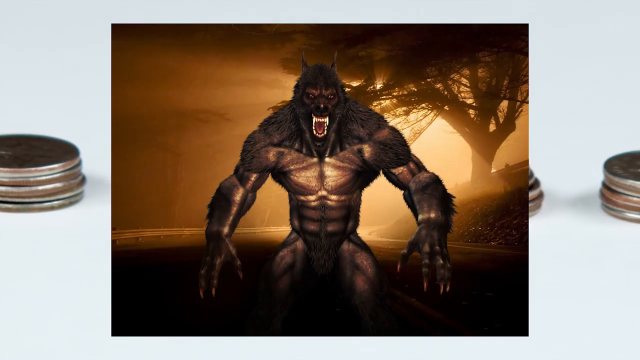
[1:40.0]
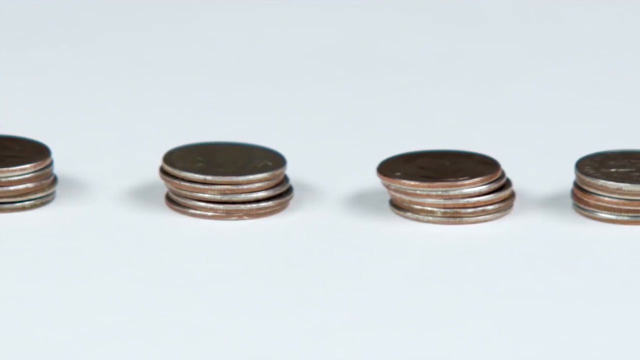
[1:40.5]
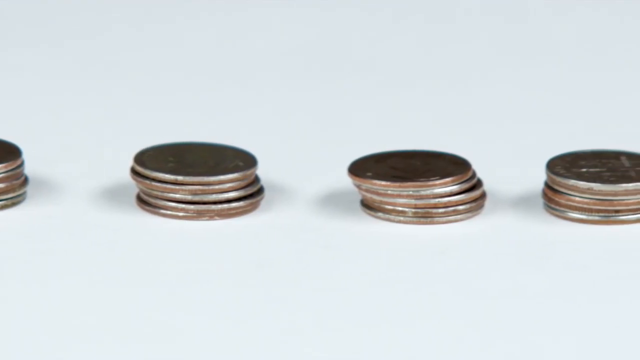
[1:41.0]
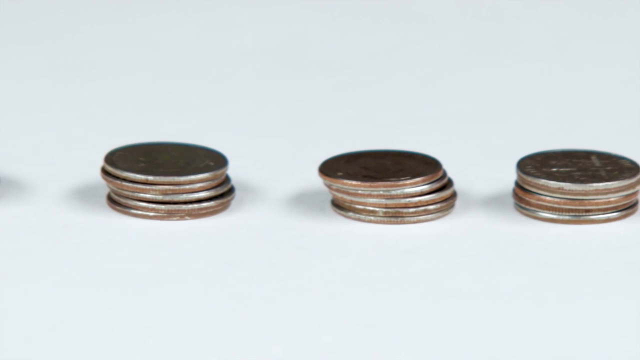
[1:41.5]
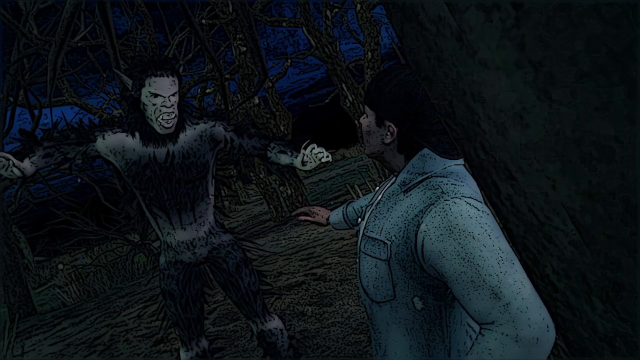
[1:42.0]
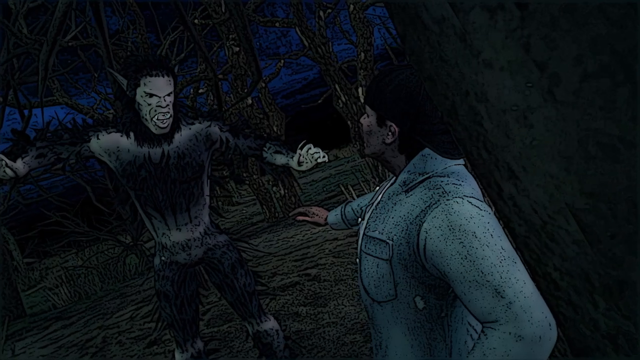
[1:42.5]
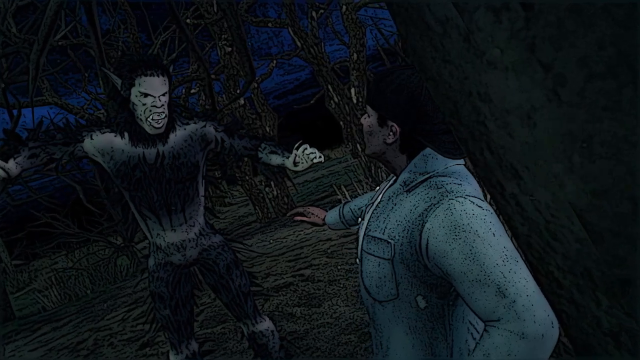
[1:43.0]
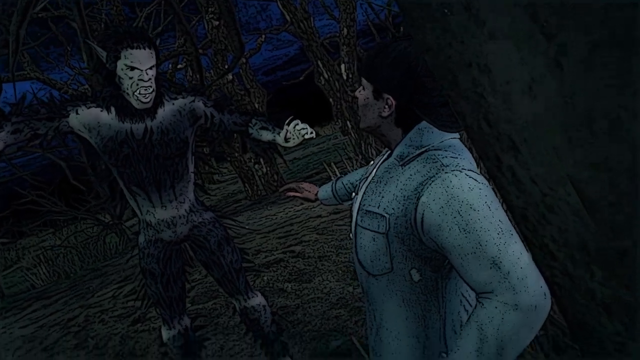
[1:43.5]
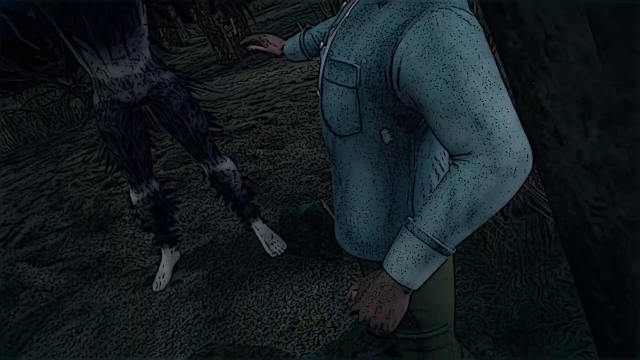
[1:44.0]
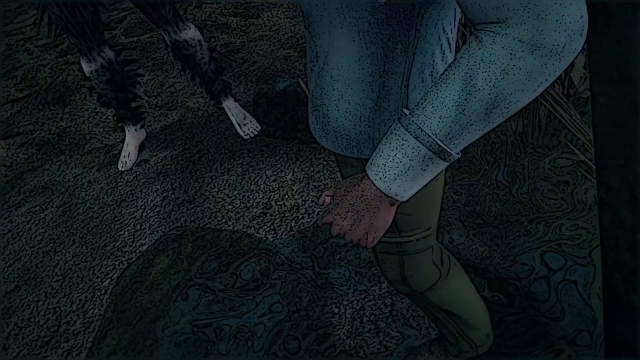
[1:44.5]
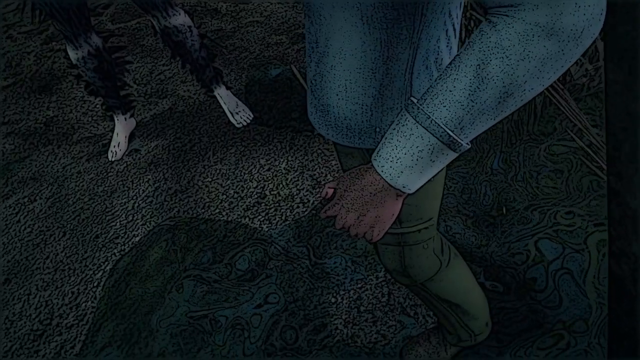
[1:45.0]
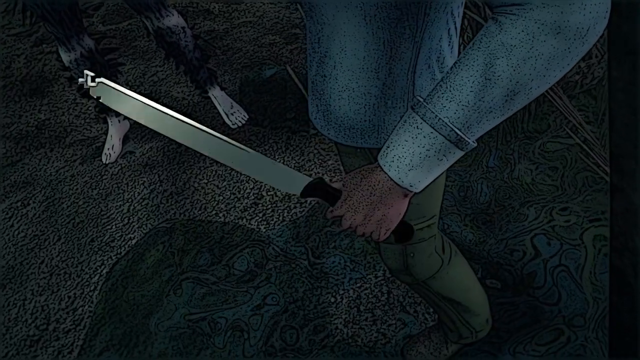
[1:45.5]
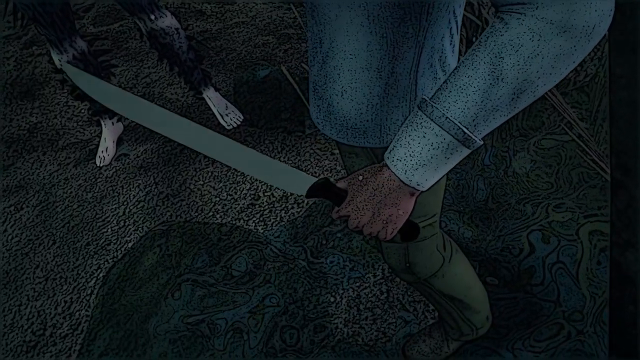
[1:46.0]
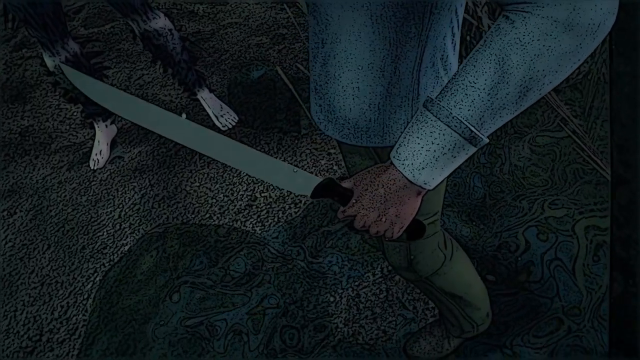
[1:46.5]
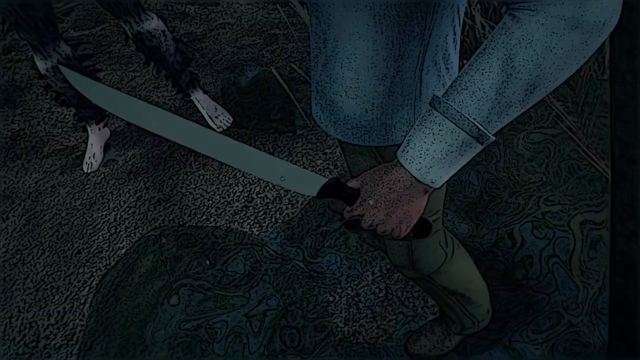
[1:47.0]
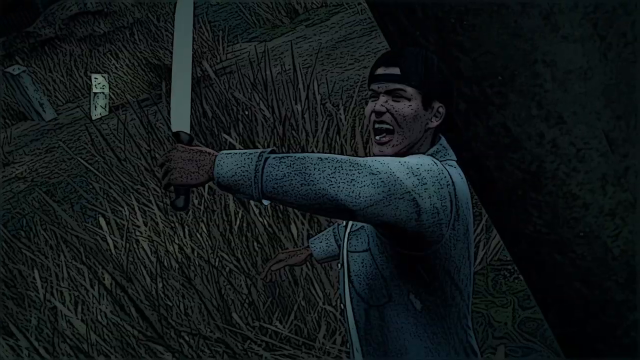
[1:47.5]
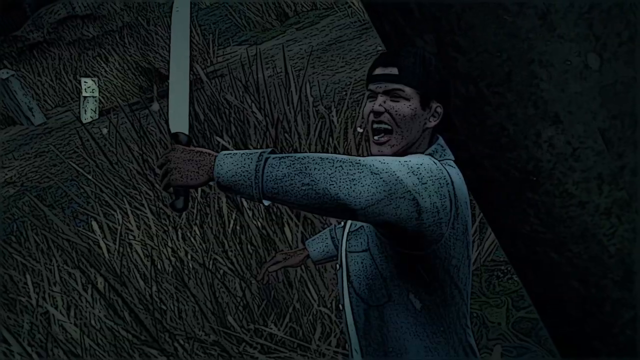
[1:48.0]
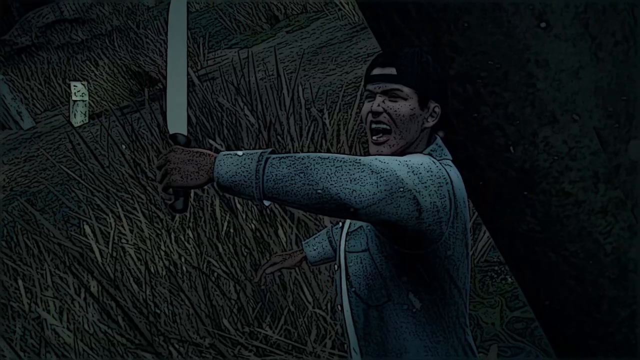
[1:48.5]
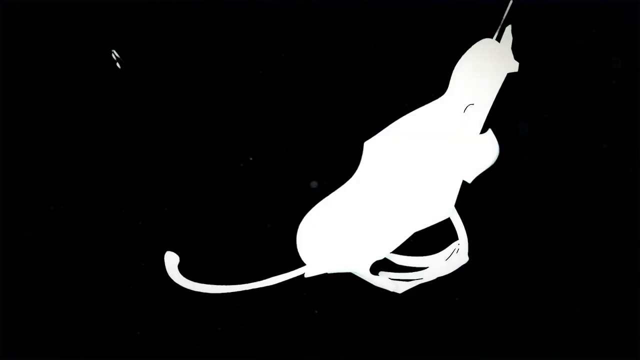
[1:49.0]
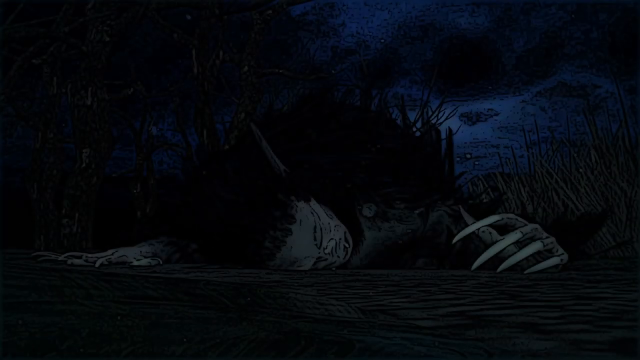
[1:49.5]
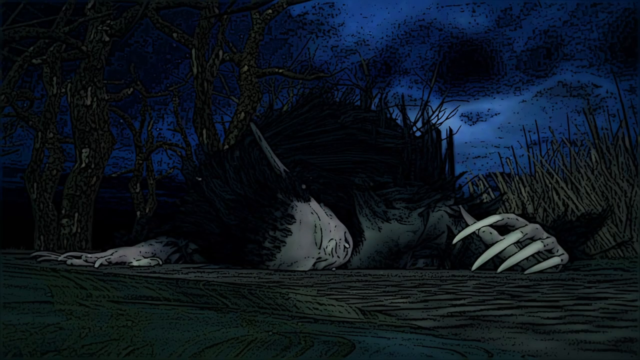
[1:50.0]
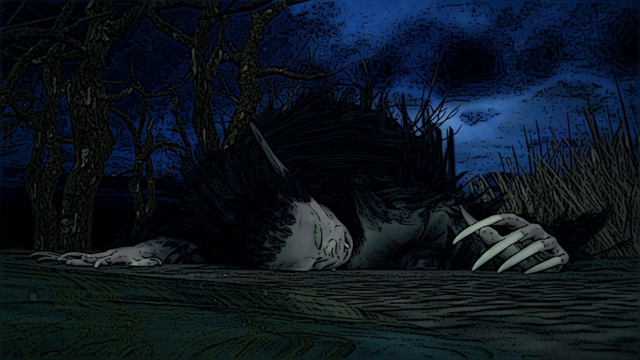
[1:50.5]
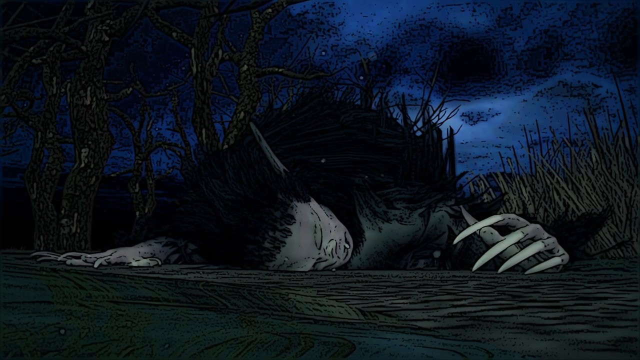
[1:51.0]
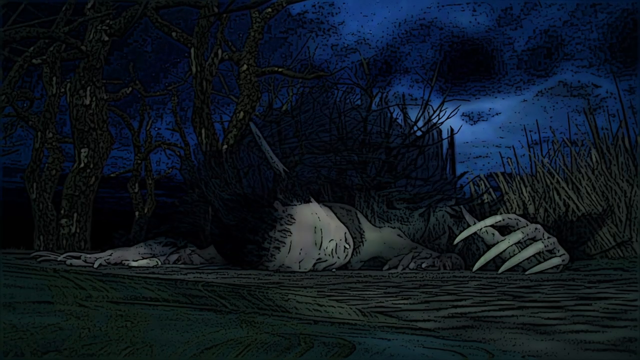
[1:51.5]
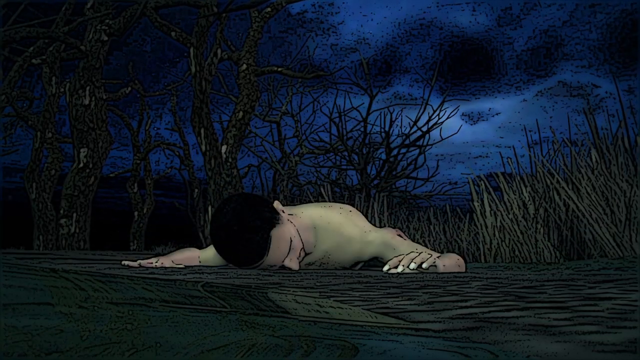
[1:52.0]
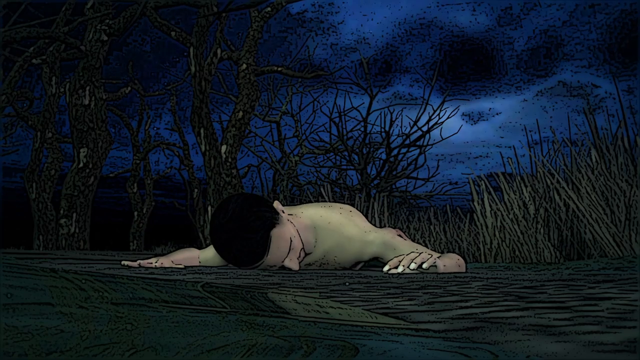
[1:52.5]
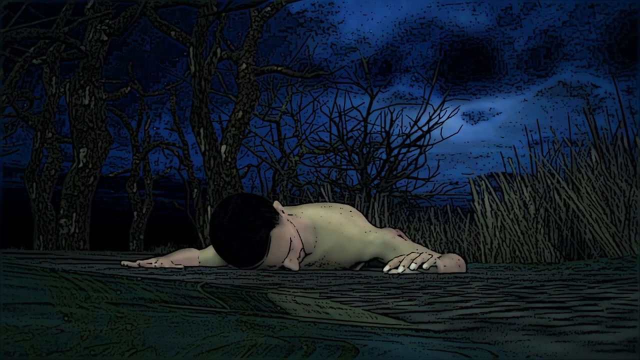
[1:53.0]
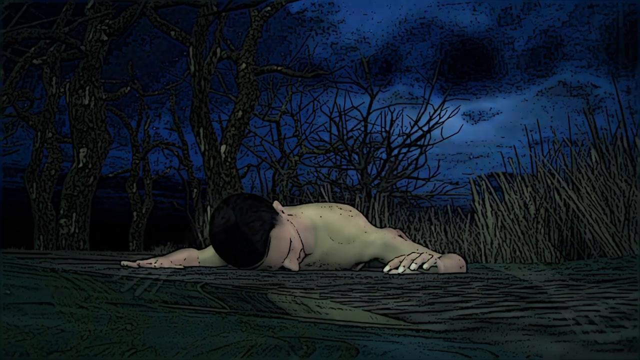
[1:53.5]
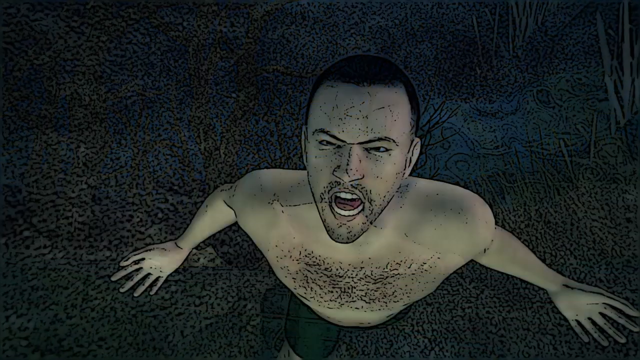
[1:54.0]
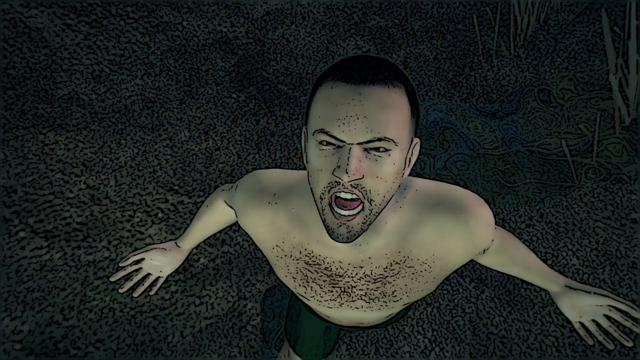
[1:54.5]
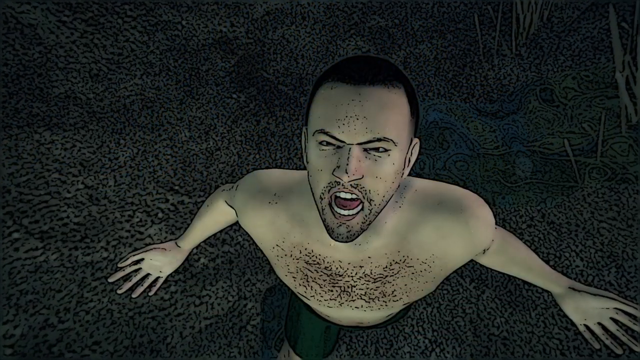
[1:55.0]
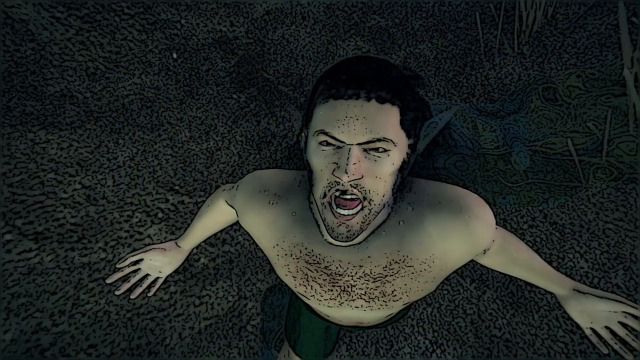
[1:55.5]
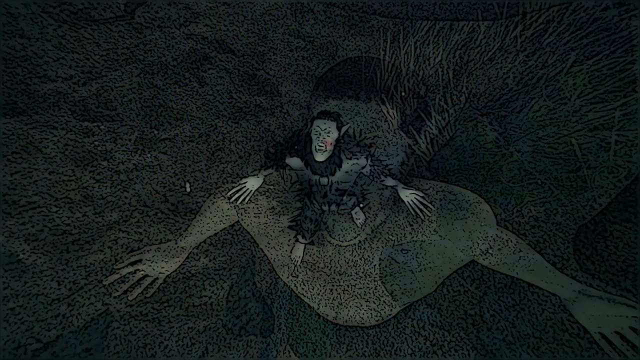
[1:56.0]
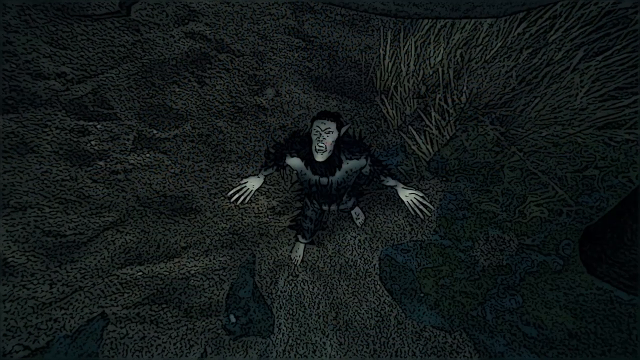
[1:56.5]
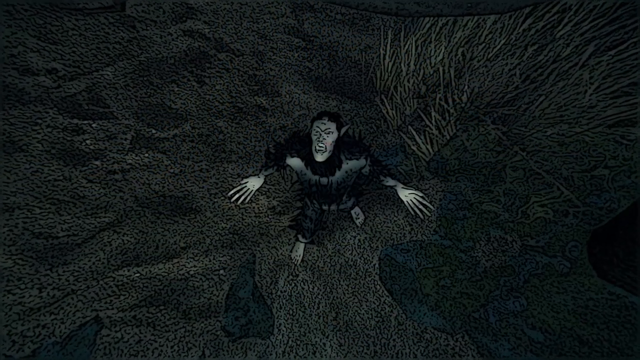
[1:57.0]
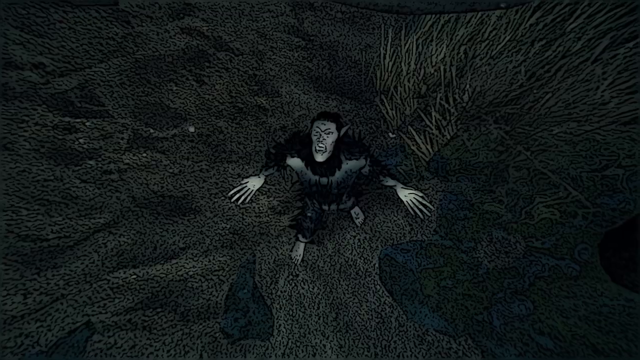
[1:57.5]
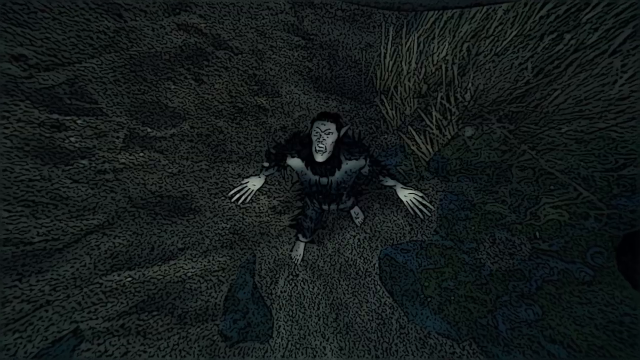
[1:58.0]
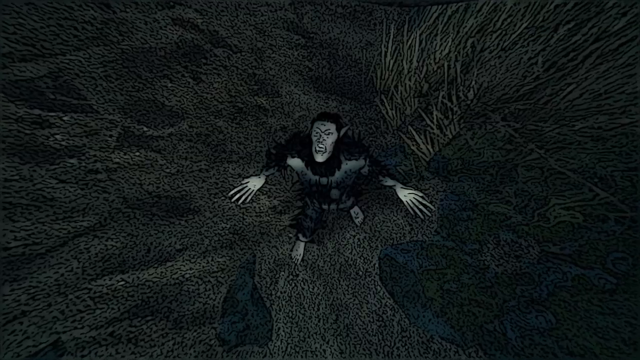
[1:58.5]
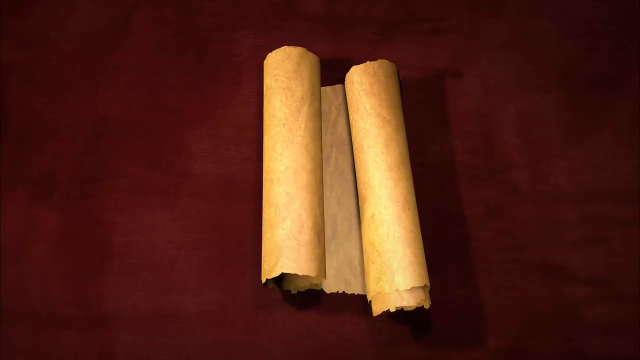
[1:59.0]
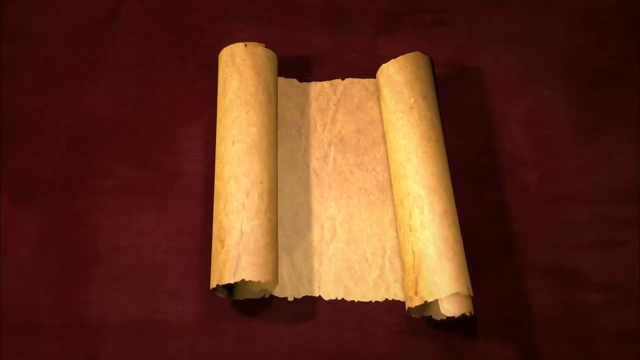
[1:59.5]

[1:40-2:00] A picture of a werewolf appears, and another picture or video of coins, apparently quarters, goes over it. A CGI werewolf attacks a man in a jean jacket in a really dark swamp. The CGI effect pans to the man's hand, where a machete appears. The werewolf is on the ground and transforms back into the man, who screams, and then he transforms back into the werewolf. Then a scroll, like an old parchment, begins to unravel on a table of dark wood that looks like mahogany.